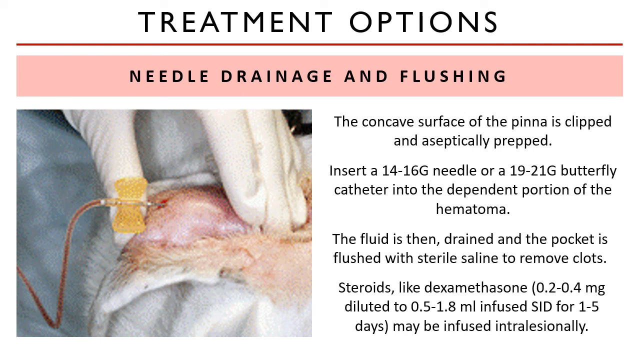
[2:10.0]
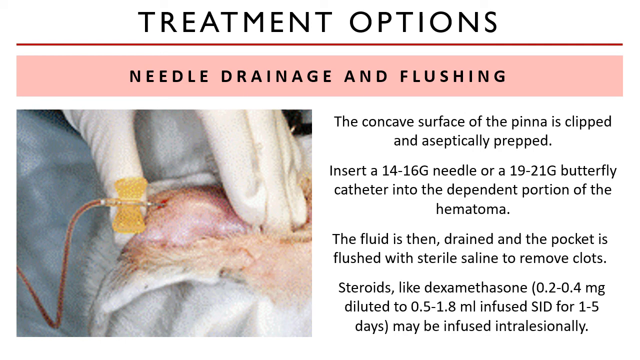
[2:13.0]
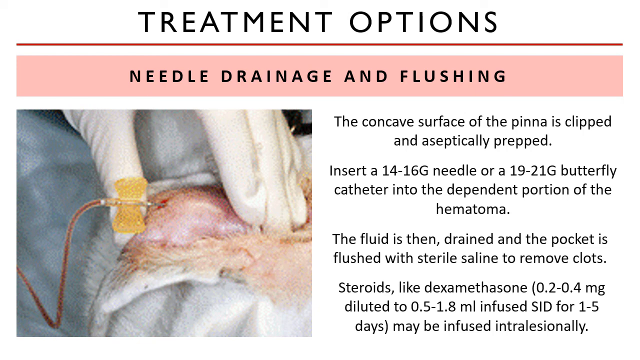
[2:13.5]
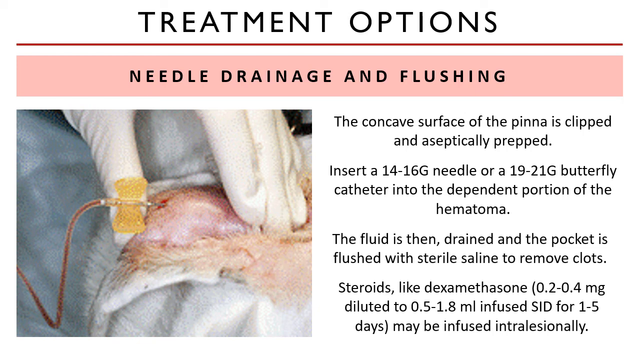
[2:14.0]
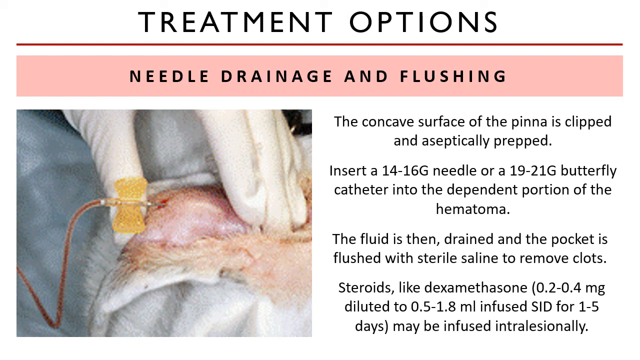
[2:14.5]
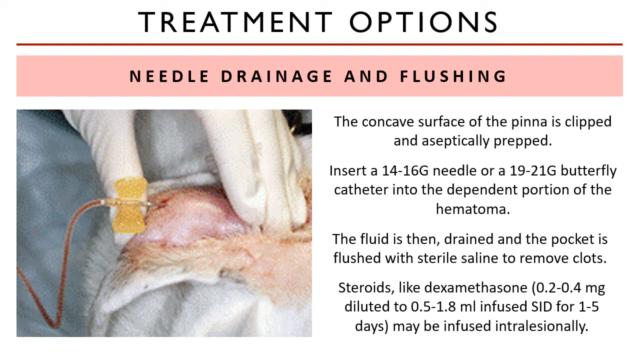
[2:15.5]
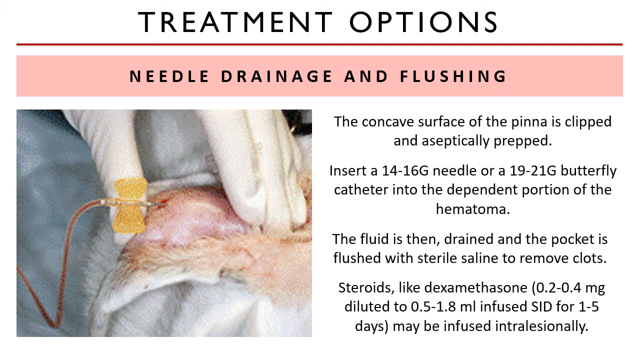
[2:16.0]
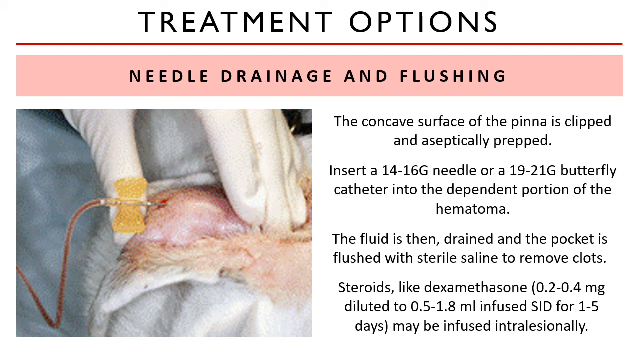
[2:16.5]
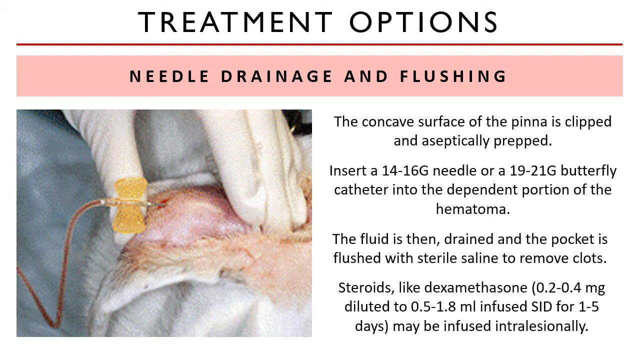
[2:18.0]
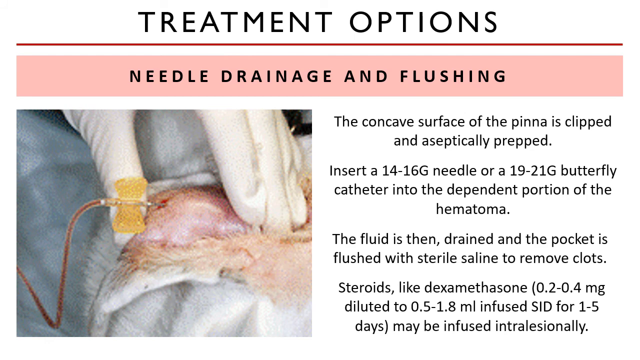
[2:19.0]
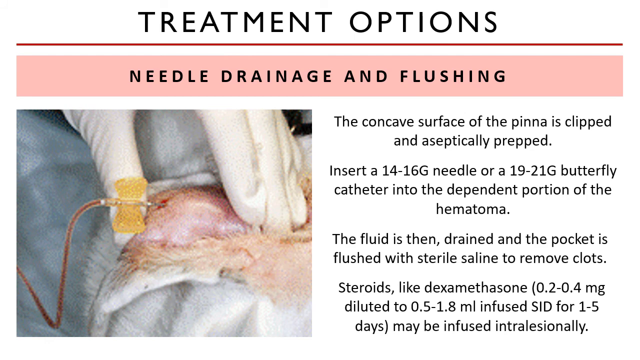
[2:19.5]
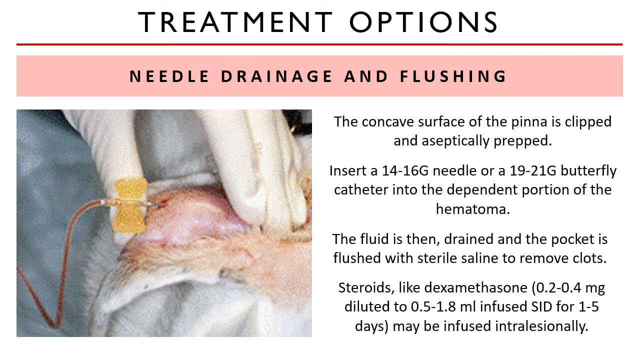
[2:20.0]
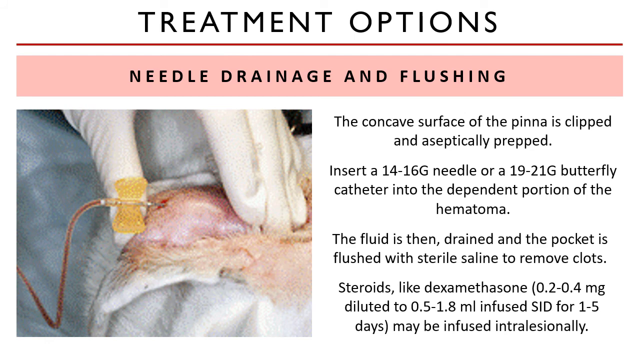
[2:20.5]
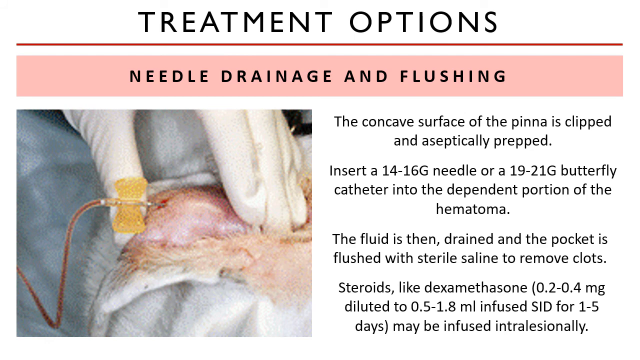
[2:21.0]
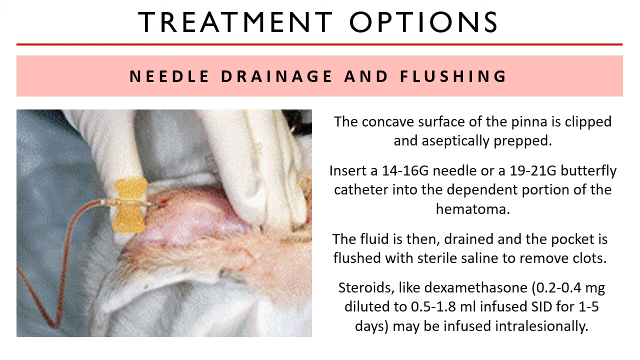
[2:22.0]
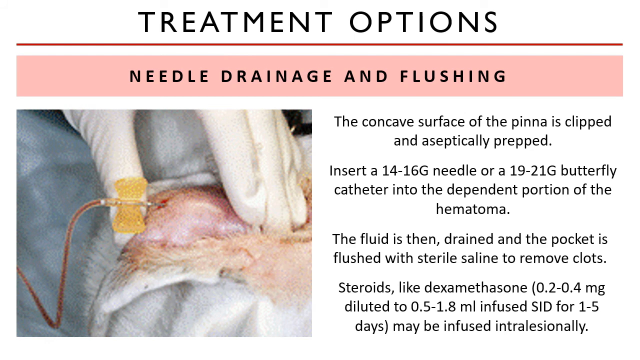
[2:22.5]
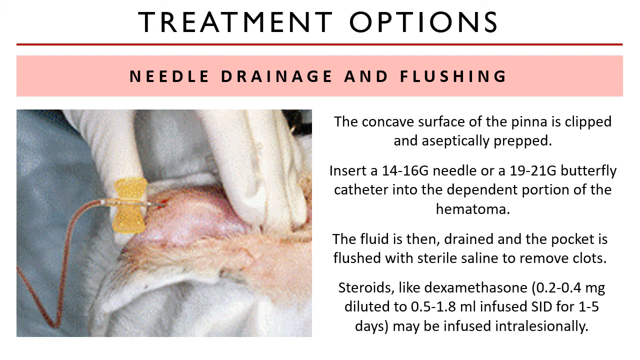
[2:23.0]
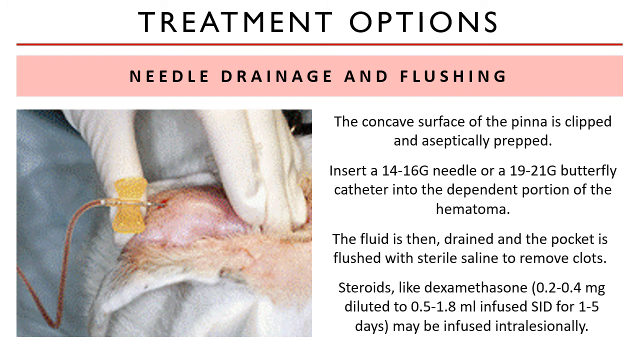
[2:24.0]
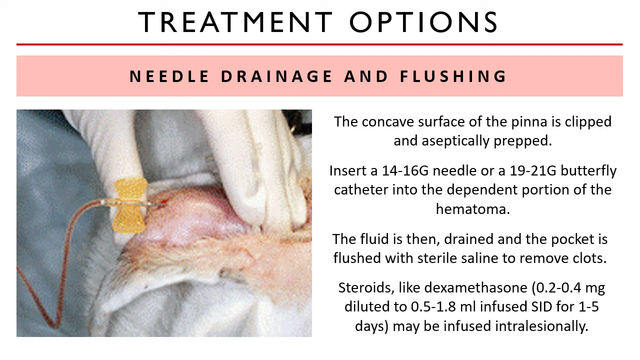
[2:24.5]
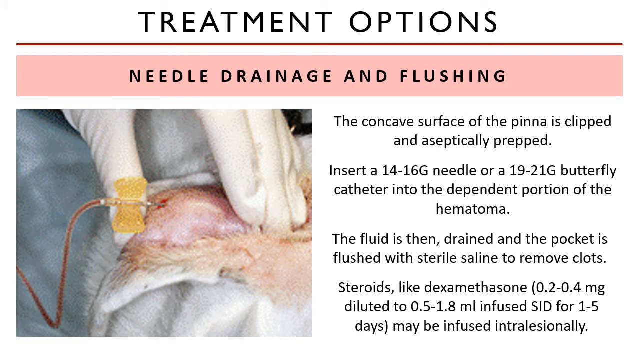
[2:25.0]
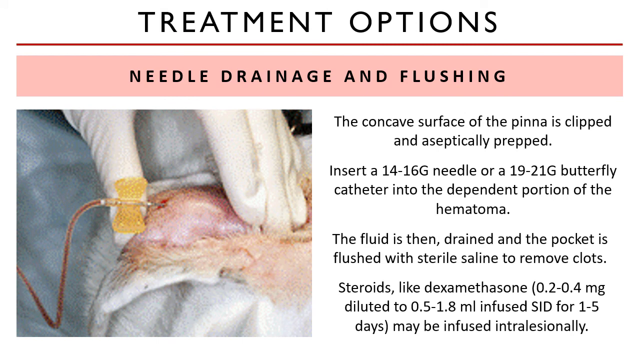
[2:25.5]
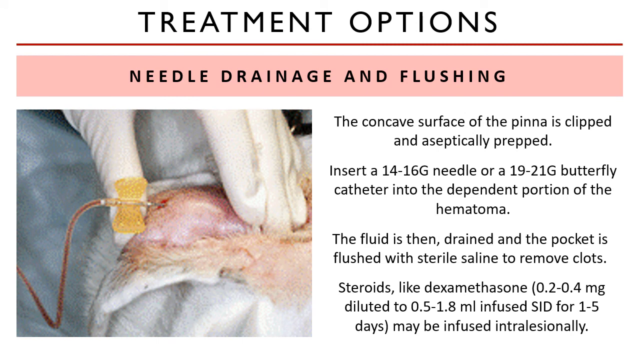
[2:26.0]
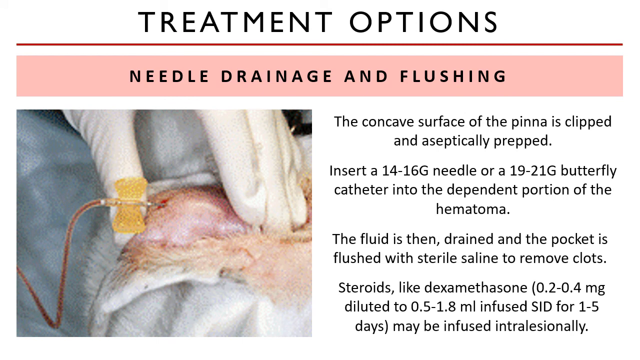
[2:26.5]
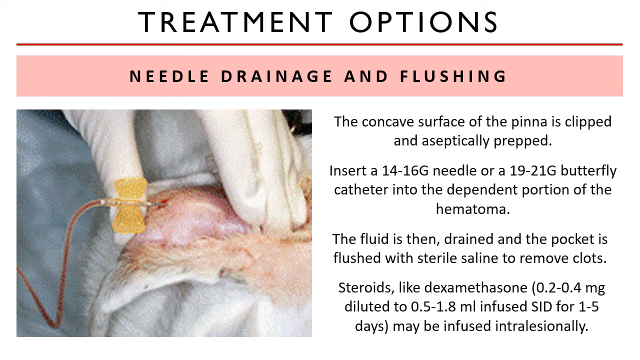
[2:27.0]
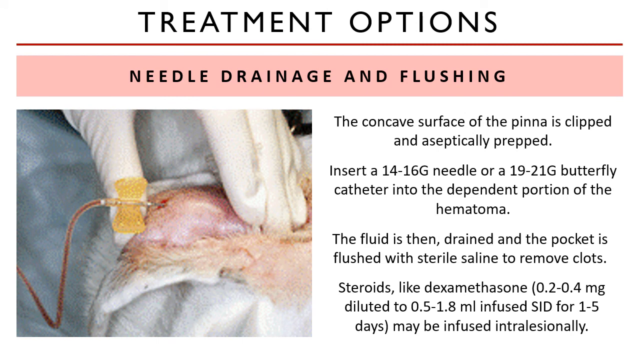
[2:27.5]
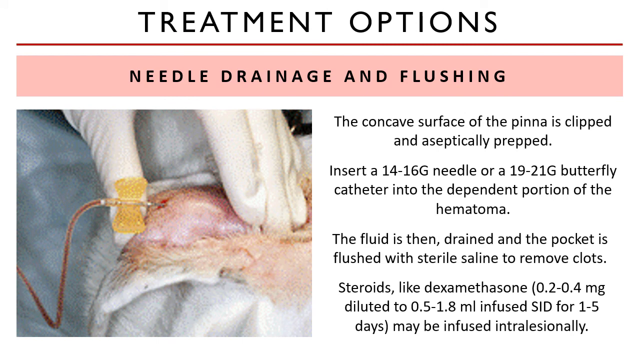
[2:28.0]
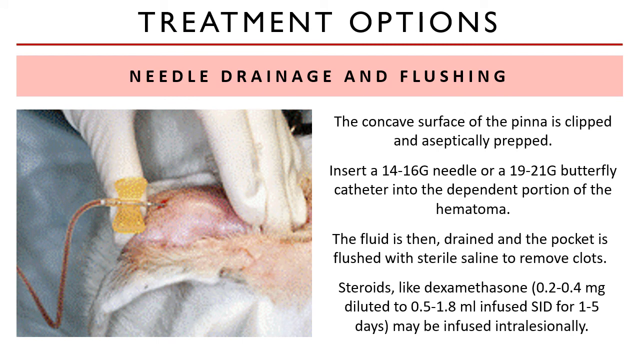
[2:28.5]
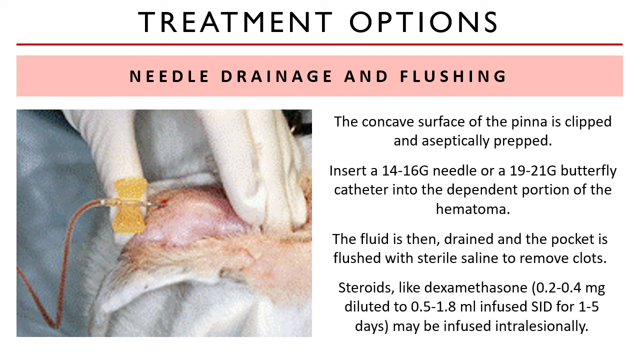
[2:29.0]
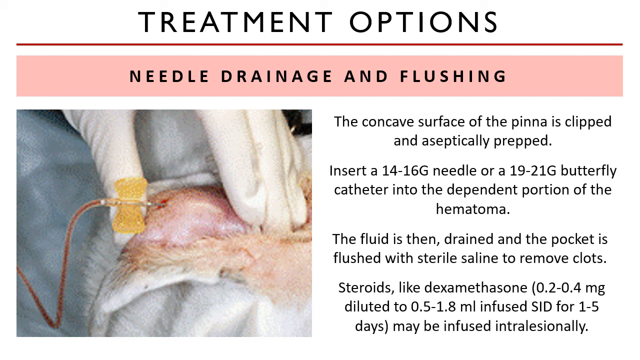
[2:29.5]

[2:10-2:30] Everything is pretty much the same. At the top, in black capital letters that are not bold, it reads "treatment options," with a thin red line across and then a pink border reading "needle drainage and flushing" in black capital letters, in a font not as big as what is apparently the title. Nothing changes from before. To the right, the text reads "the concave surface of the PINNA is clipped," "aseptically prepped," "insert 14-16G needle or 19-21G butterfly catheter in the dependent portion of the hematoma," and "The fluid is then drained and the pocket is flushed with sterile saline to remove the clots," followed by text about steroids like dexamethasone being diluted and that they "may be infused intralesionally."